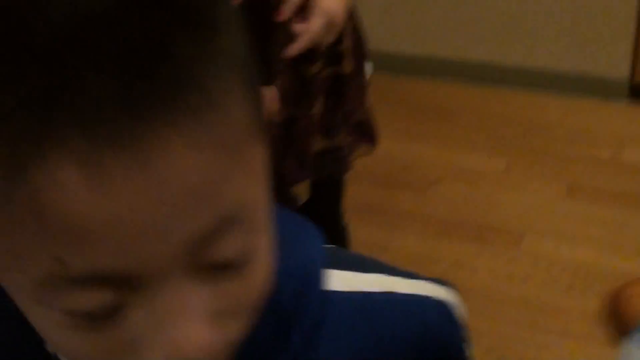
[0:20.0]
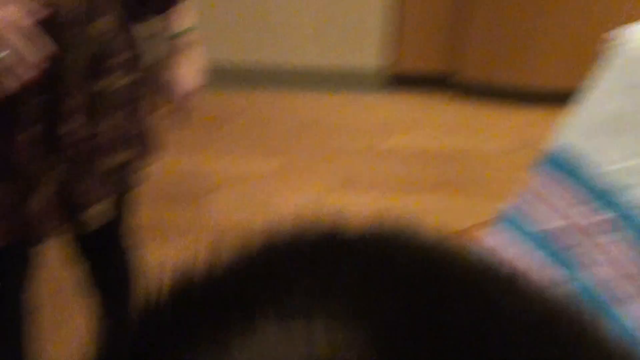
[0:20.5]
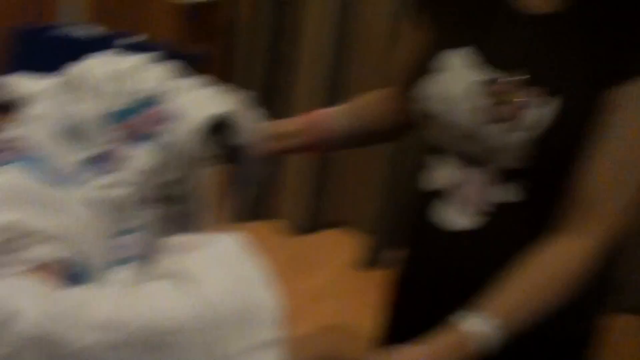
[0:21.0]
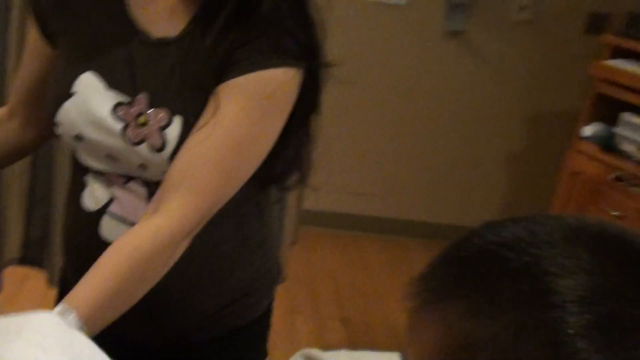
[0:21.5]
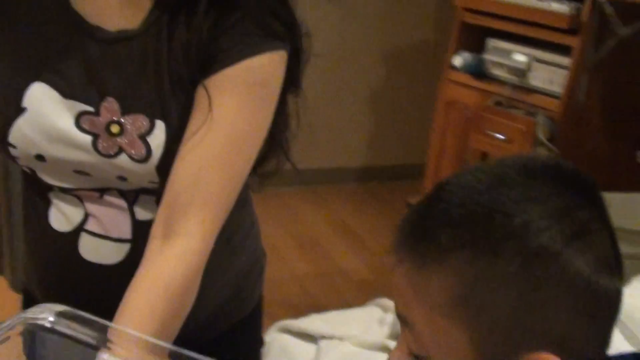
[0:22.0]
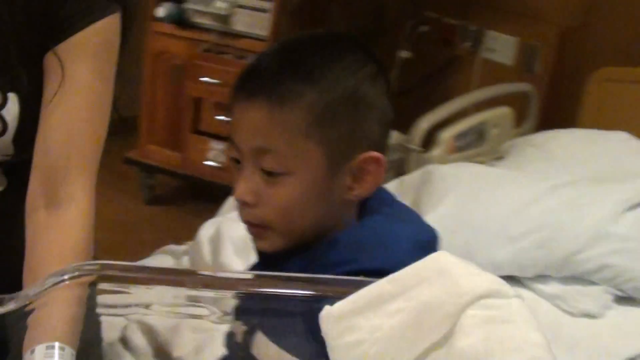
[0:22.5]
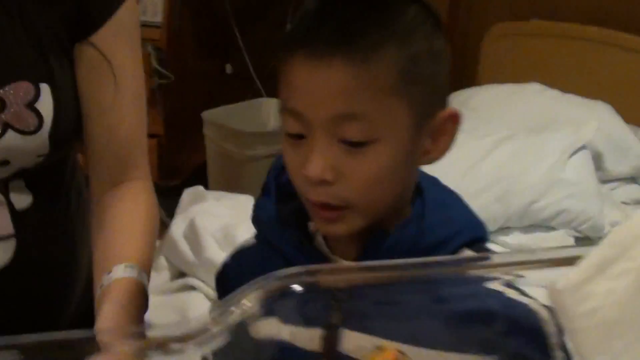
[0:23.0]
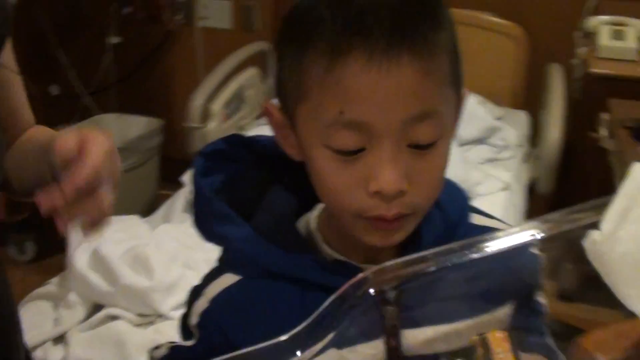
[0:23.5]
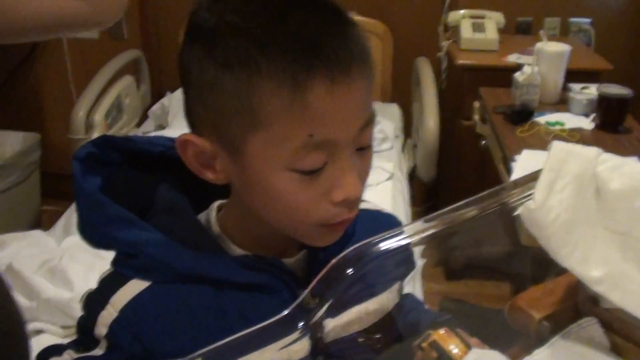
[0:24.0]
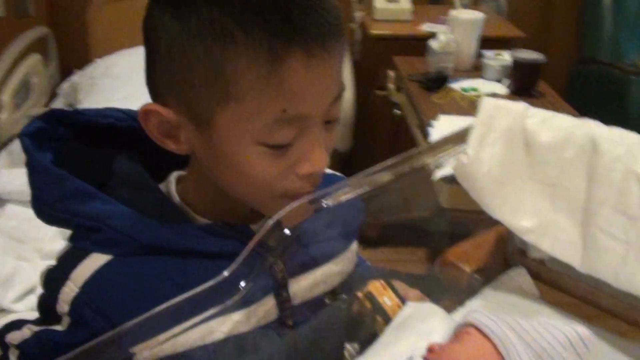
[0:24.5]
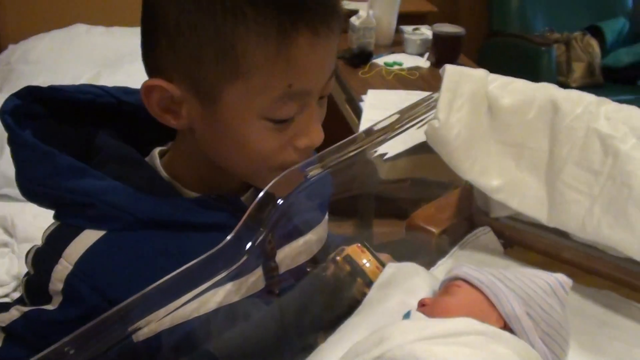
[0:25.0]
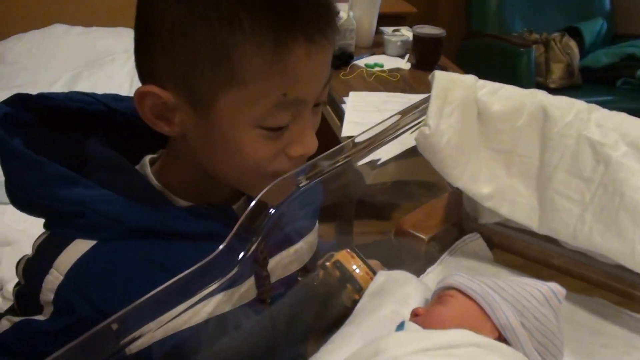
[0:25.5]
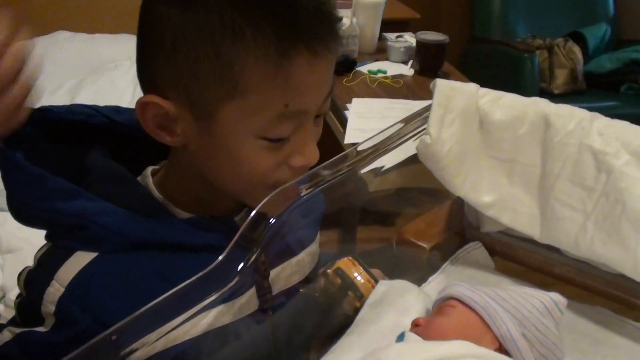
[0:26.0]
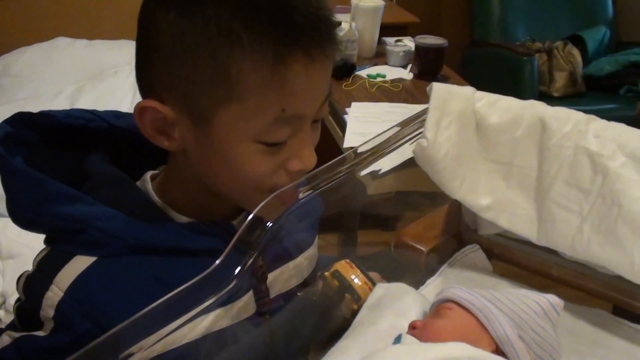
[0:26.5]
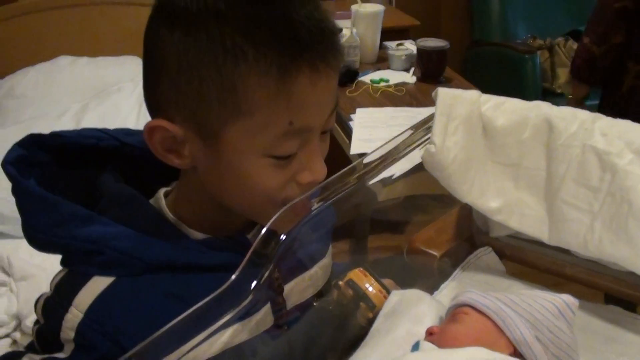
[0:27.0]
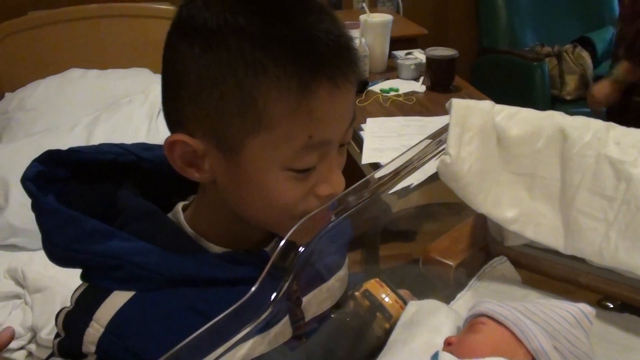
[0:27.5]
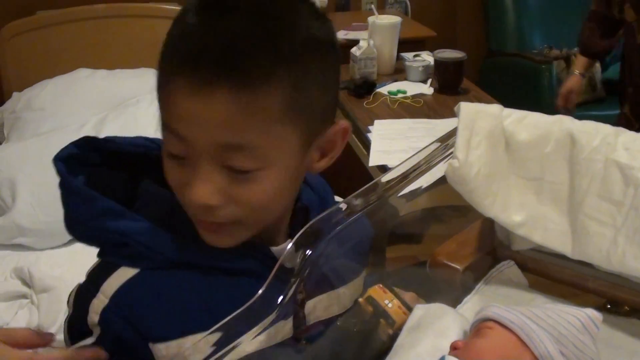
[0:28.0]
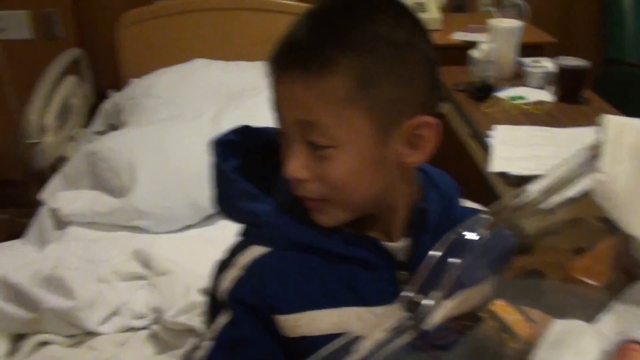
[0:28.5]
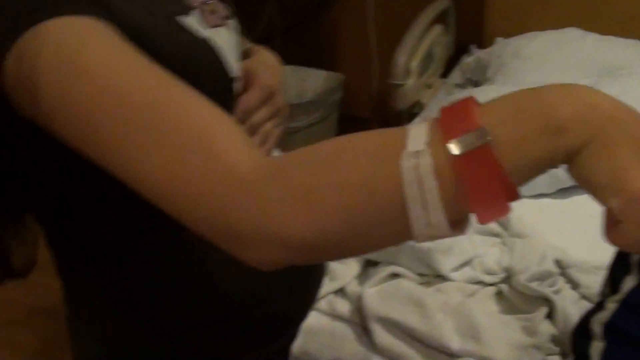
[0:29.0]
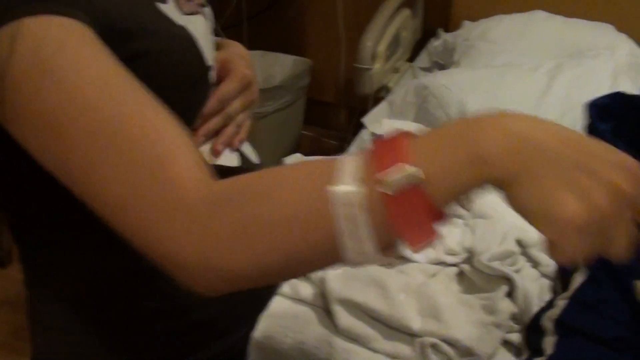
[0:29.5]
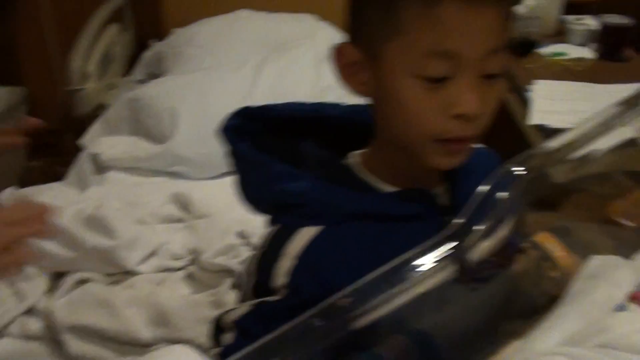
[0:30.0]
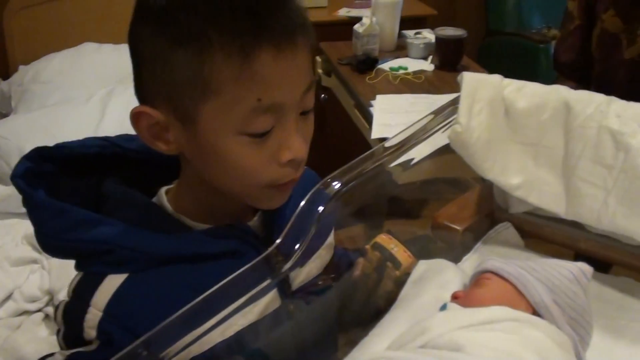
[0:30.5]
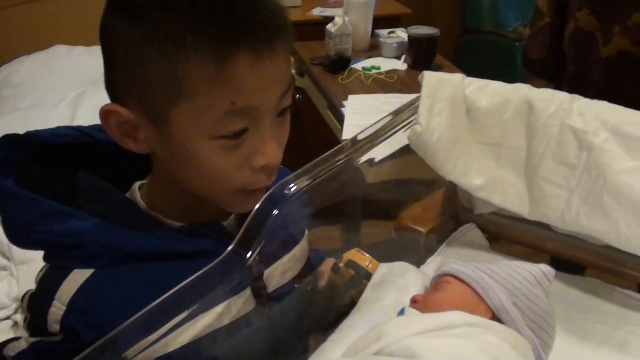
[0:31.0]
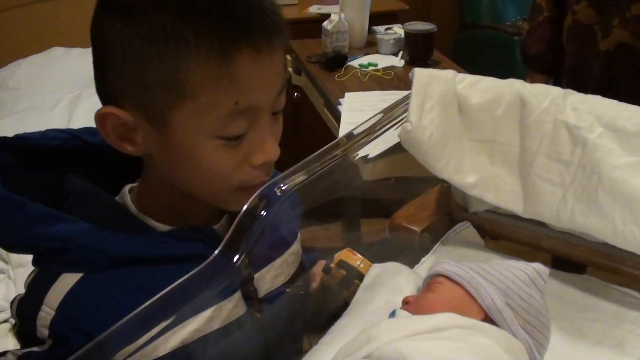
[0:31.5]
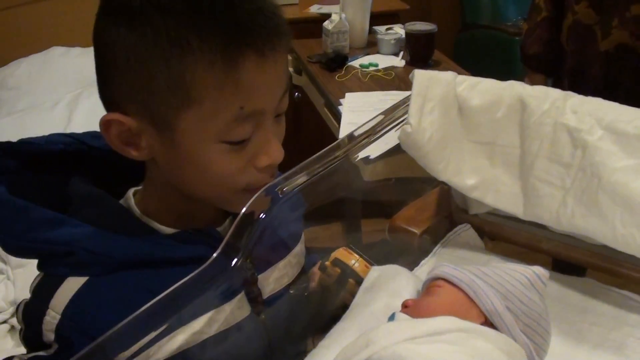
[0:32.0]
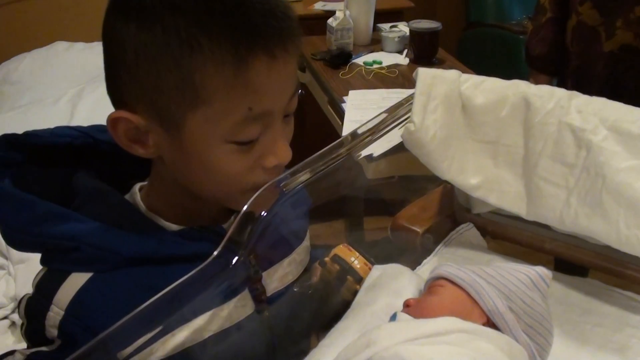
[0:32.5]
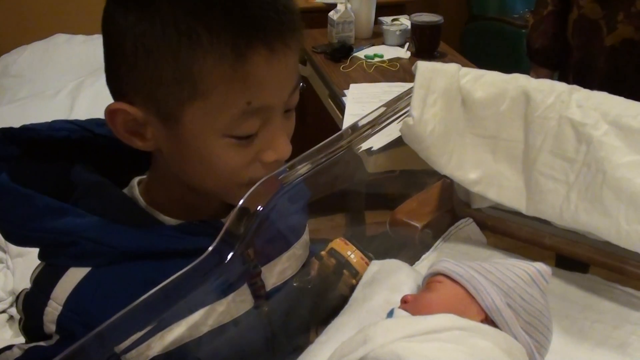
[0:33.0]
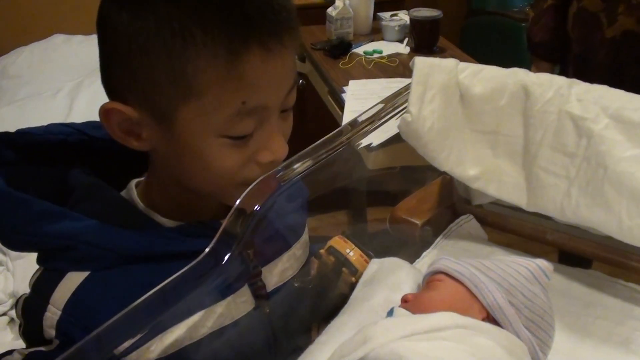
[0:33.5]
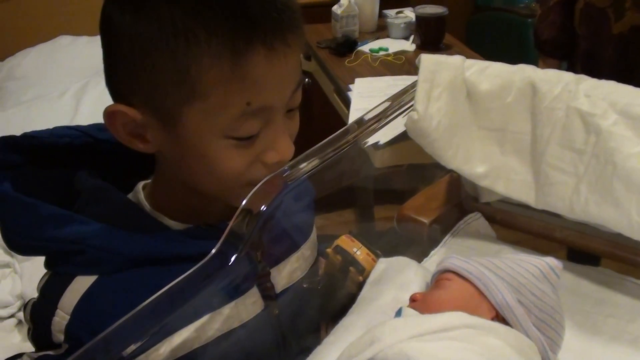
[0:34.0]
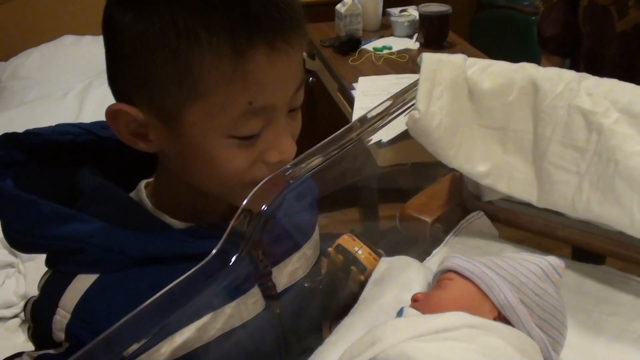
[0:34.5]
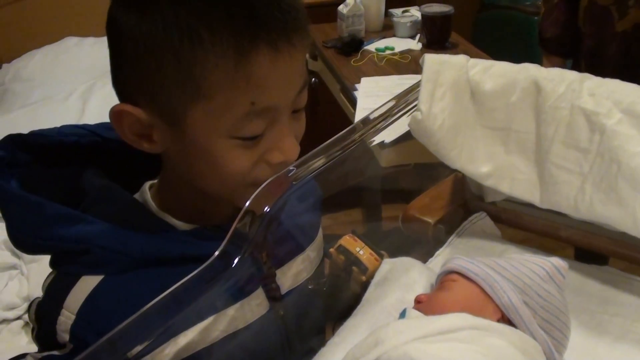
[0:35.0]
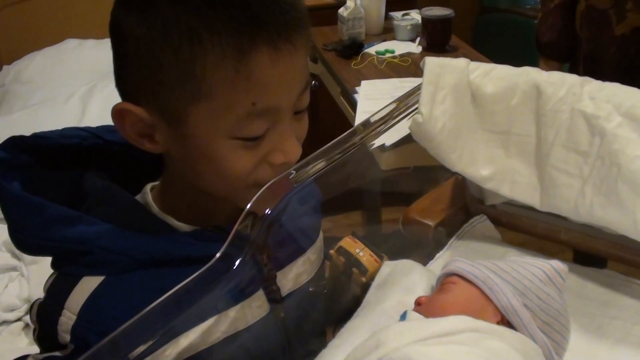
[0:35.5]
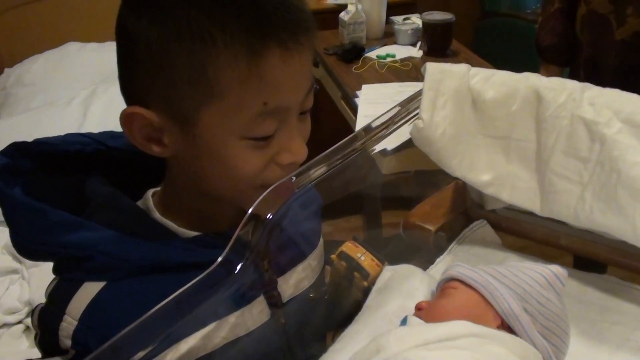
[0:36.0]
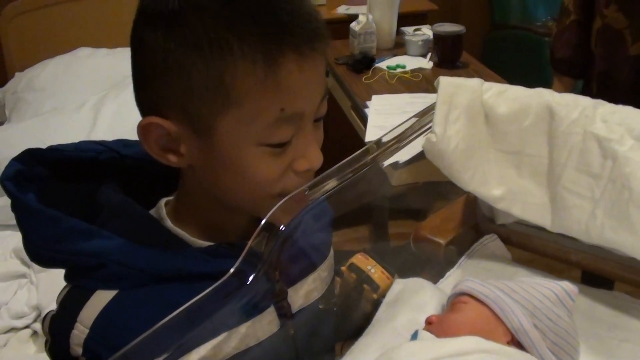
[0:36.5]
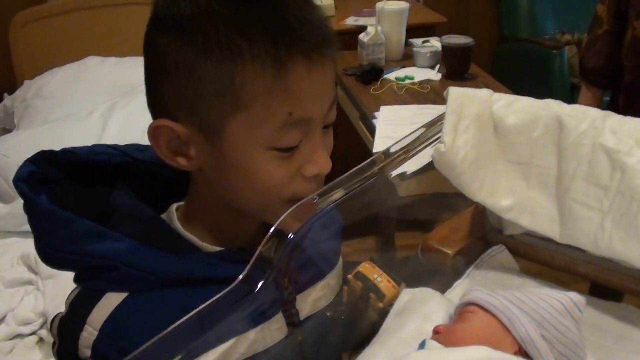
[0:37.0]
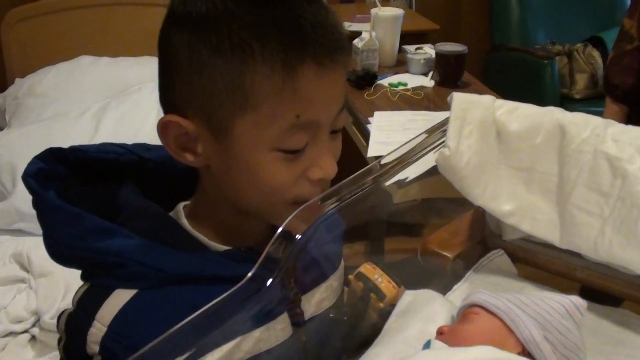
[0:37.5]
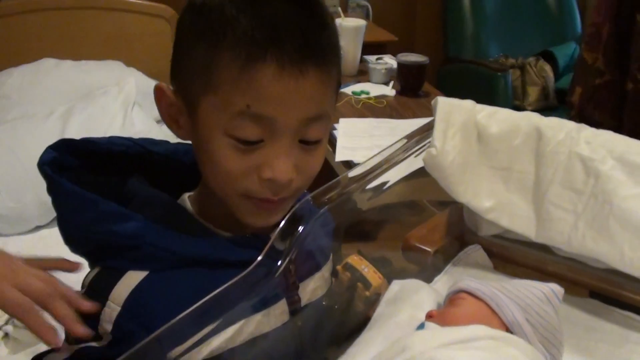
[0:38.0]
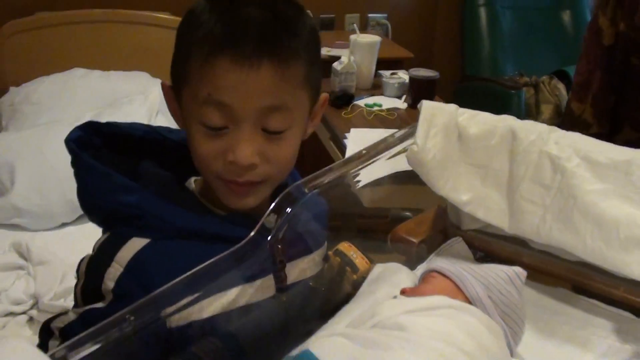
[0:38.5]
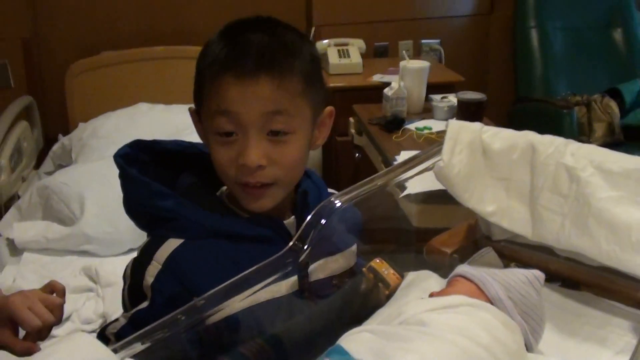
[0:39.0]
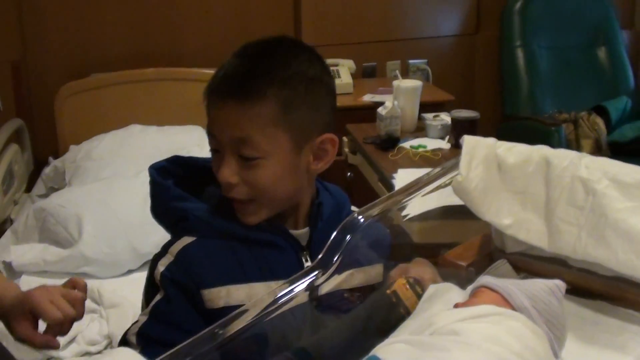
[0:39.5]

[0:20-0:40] The little boy crosses around to the other side of the baby bassinet. He stands near the hospital bed next to a woman who is apparently his mother. She has long dark hair and wears a black shirt with a pink and white Hello Kitty on the front. She is standing near the baby and moves out of the way. The boy holds his toy, which looks like a yellow truck or a yellow bus of some sort, and still wears his coat. He stands at the edge of the bassinet on the side, looking down at the baby. The baby is asleep, wrapped in blankets, wearing a small hat, and facing the boy. The mother gestures toward him and toward the baby. The boy smiles down at the baby and looks very pleased and excited to meet it. A burp cloth is over the side of the bassinet behind the baby's head, and in the background are the hospital bed and a little table with some water on it and some papers.